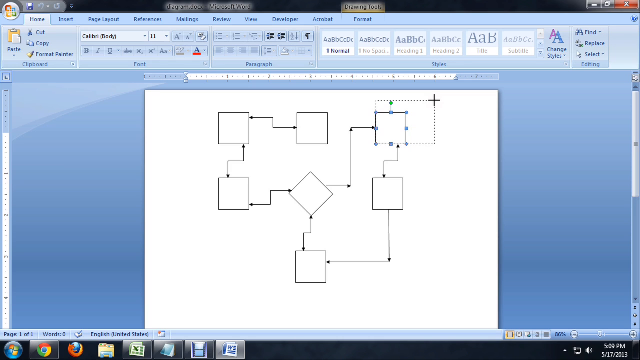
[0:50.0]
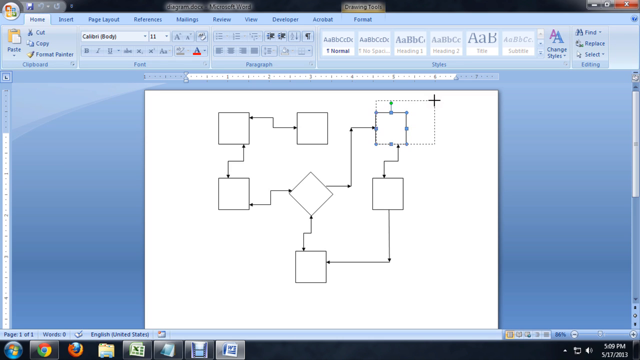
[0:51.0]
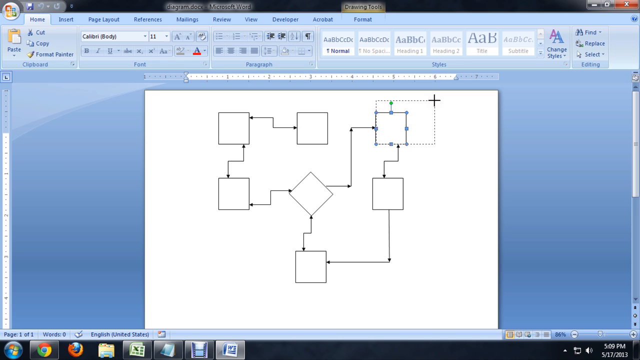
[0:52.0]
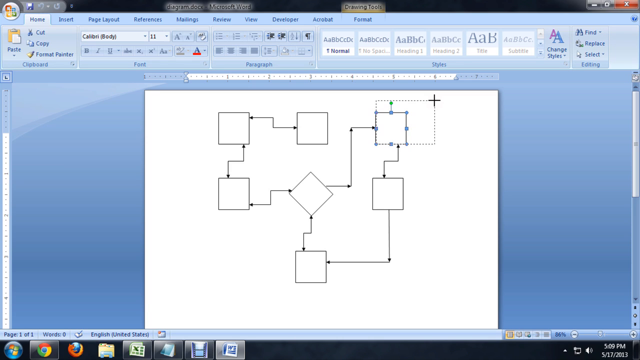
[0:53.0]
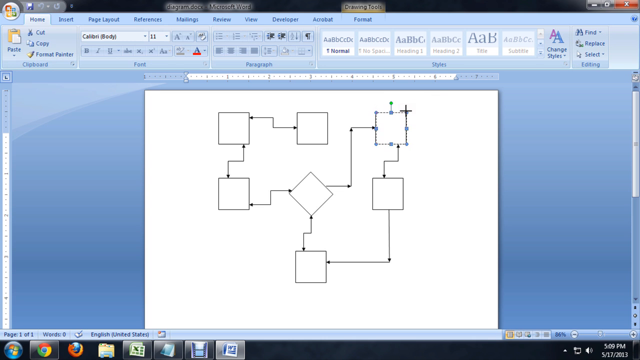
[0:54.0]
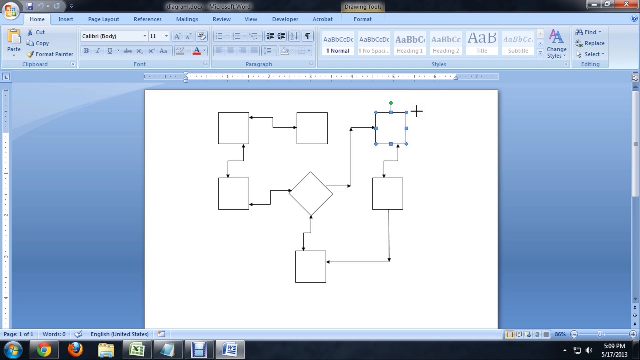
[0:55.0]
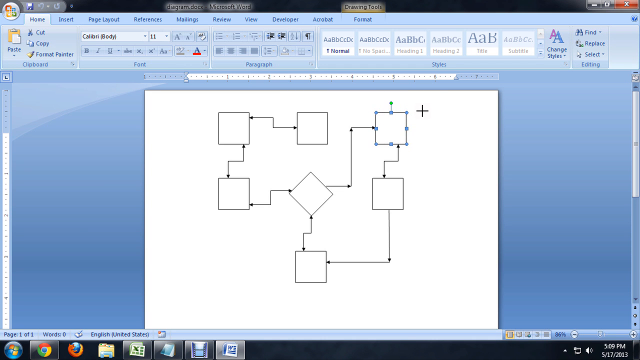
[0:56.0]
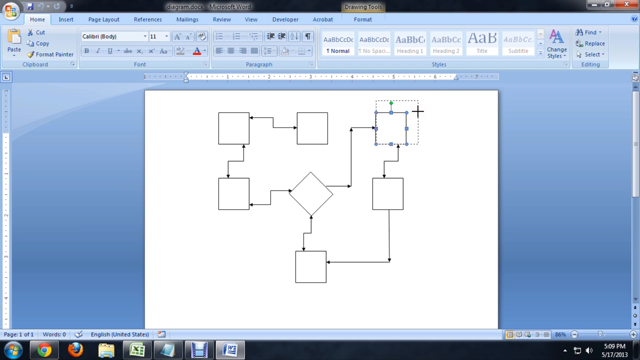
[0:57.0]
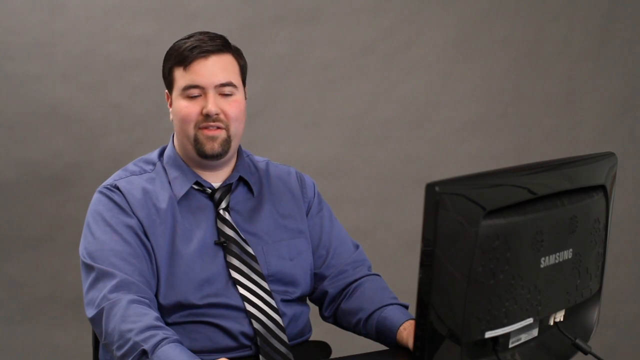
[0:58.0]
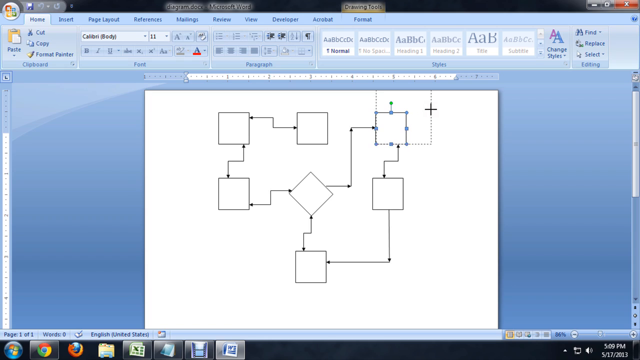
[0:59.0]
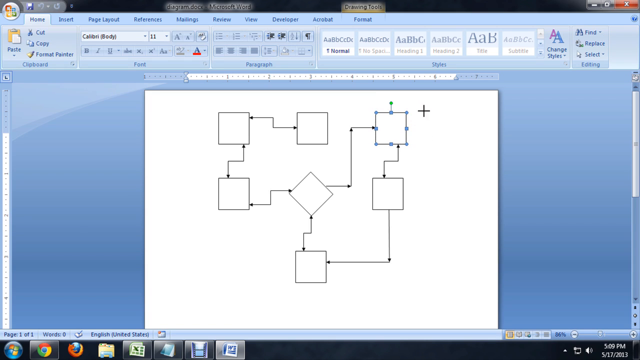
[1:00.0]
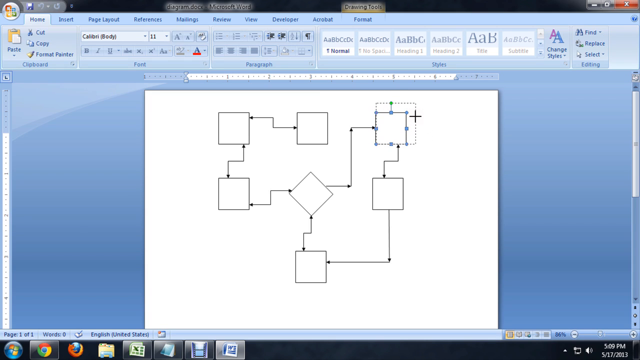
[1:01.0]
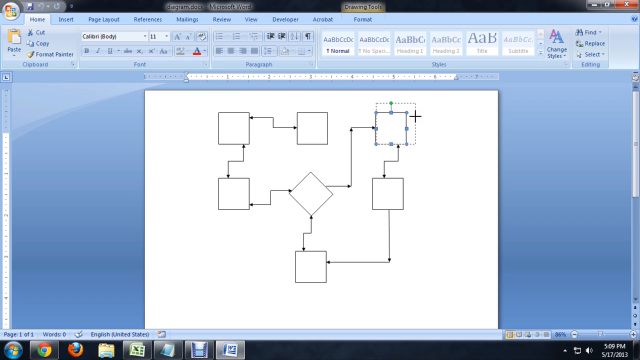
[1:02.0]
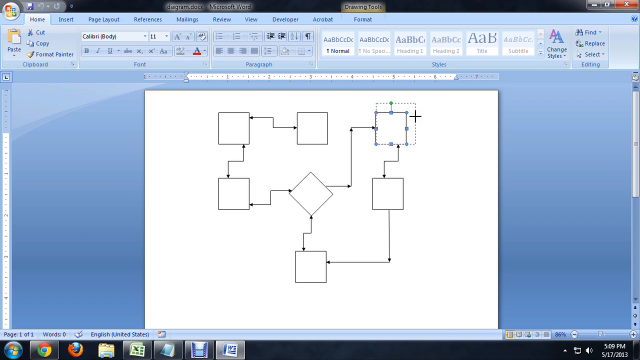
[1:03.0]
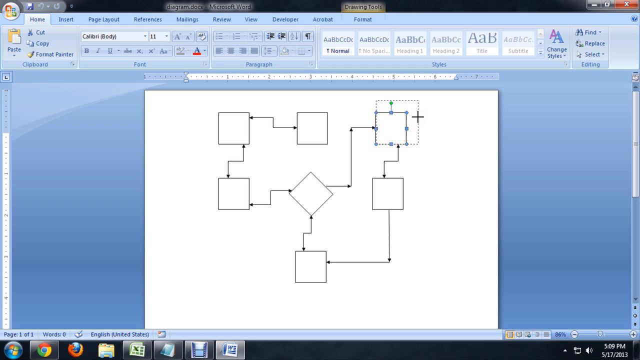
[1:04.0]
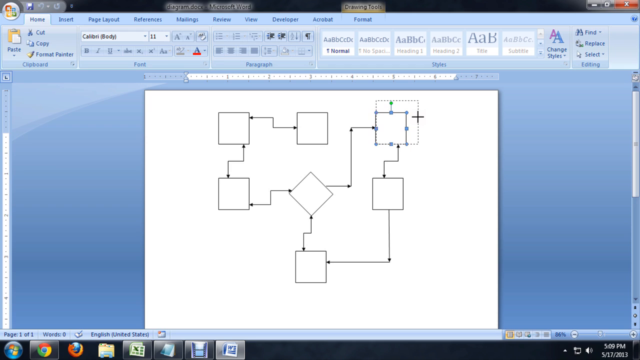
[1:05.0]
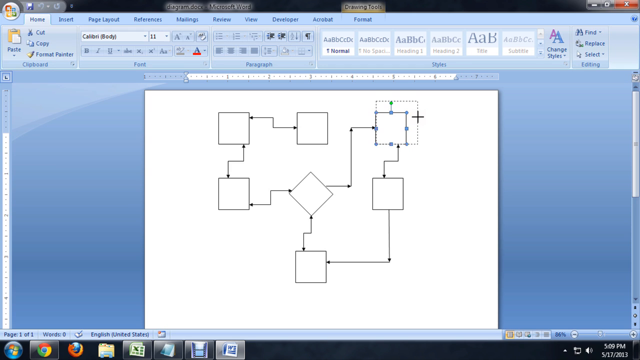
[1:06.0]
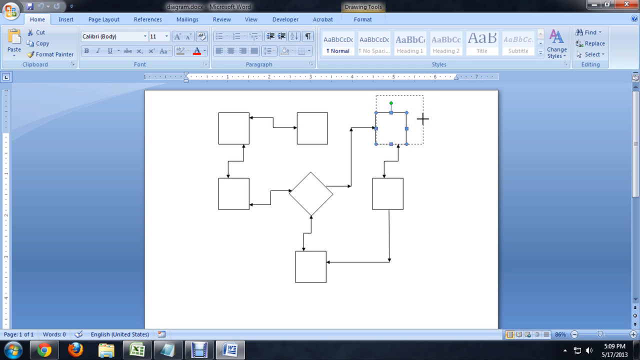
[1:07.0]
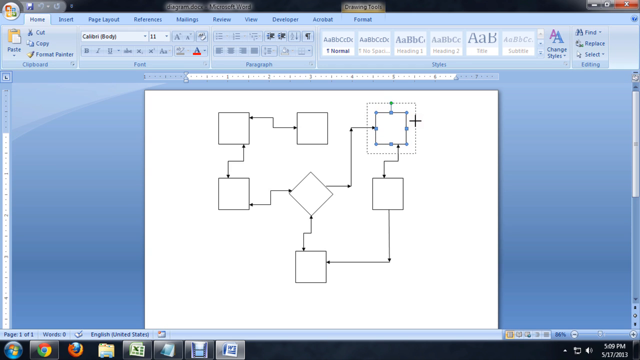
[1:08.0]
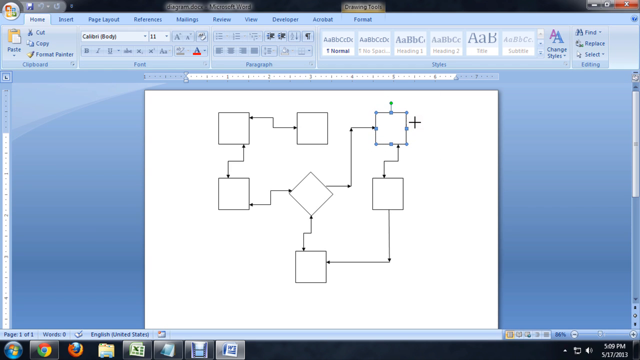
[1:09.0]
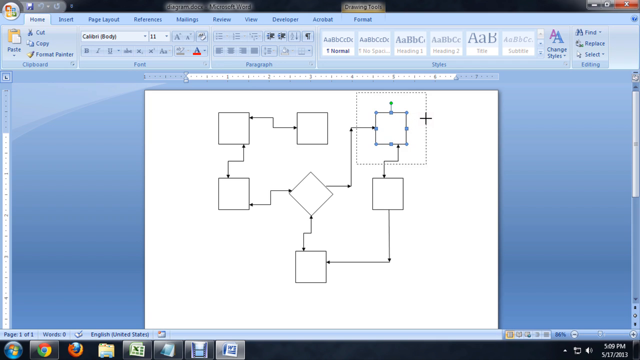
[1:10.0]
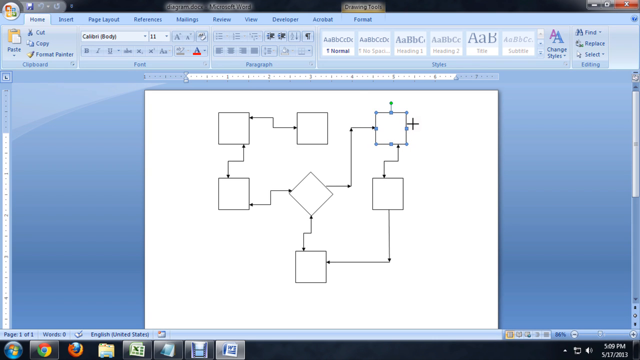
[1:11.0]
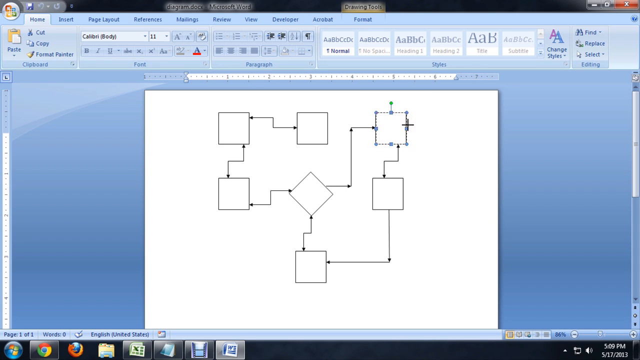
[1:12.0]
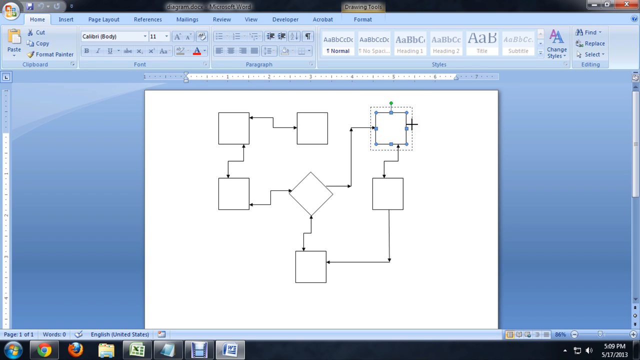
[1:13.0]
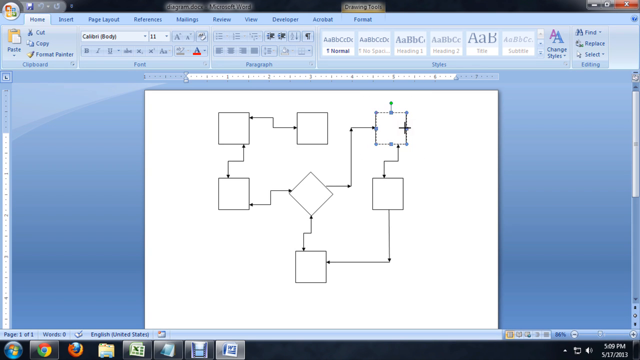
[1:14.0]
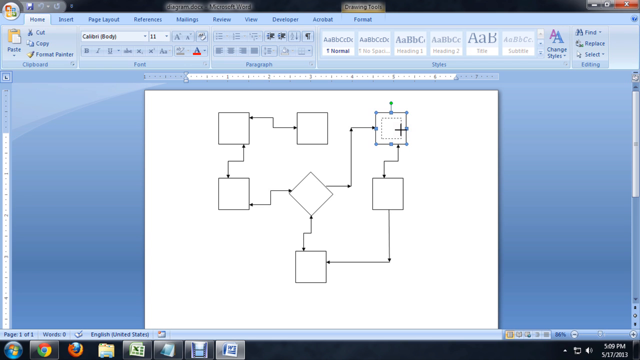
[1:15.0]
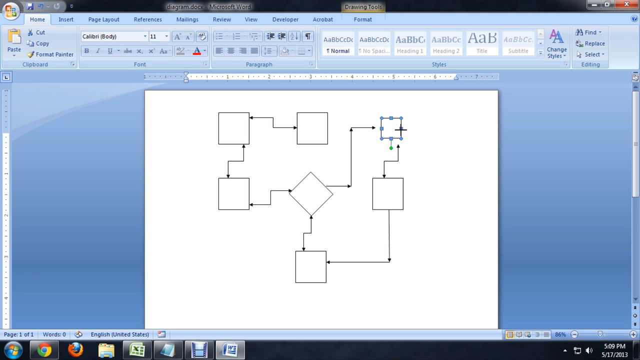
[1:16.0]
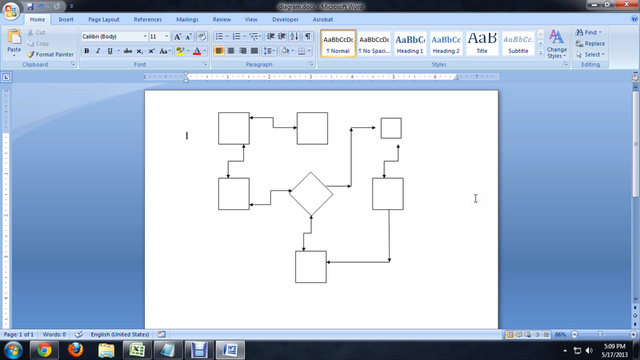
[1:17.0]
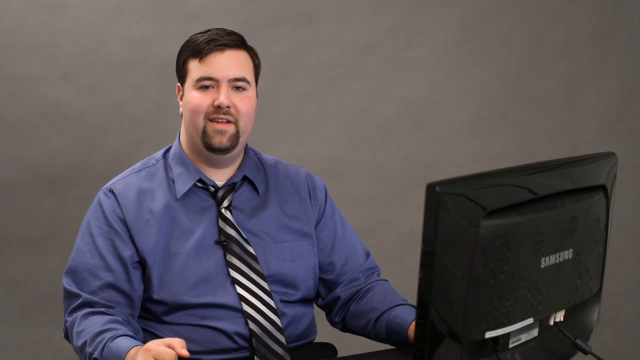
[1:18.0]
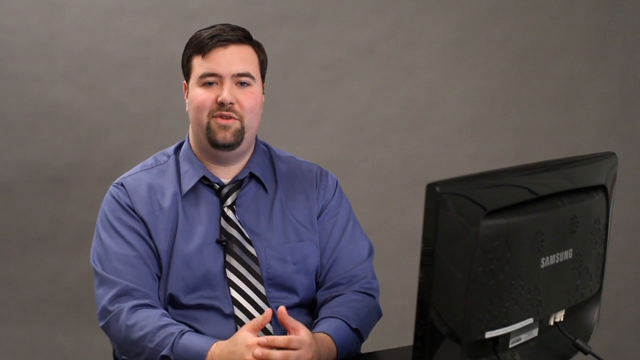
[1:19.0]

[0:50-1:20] The screen recording of Microsoft Word continues, showing squares surrounding a diamond, with the shapes connected by multiple arrows. The top right square is selected and annotated with blue circles. Using a cropping tool, Josiah Rea makes multiple attempts to extend the top right square. The scene briefly cuts back to Josiah Rea sitting in a room with a gray wall background. The screen recording then returns to the same Microsoft Word project, where the top right square is still selected and annotated, and he continues making multiple attempts to extend it with the cropping tool. He then shrinks the top right square to a smaller size using the cropping tool.